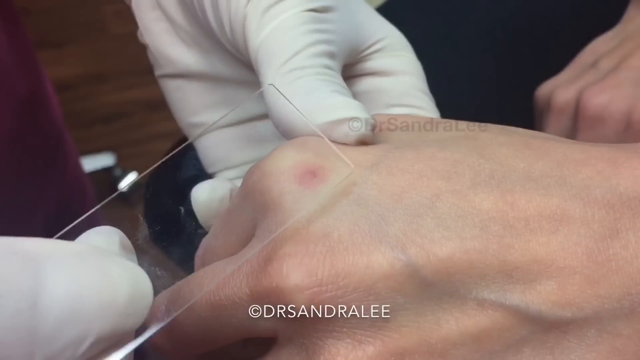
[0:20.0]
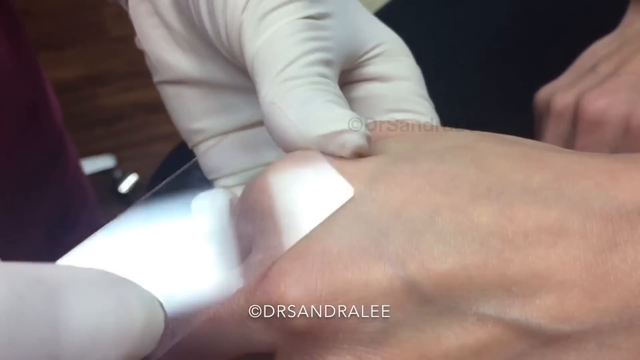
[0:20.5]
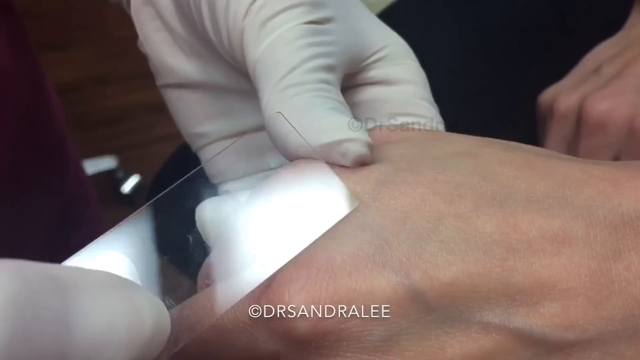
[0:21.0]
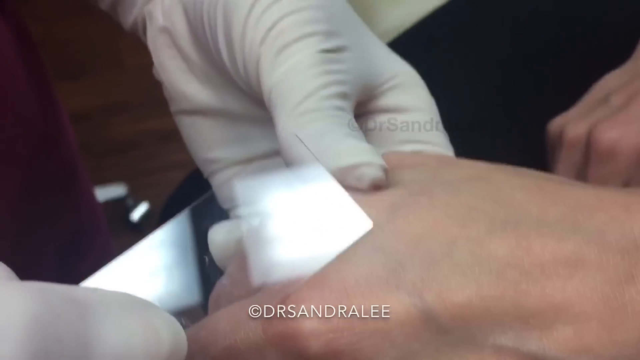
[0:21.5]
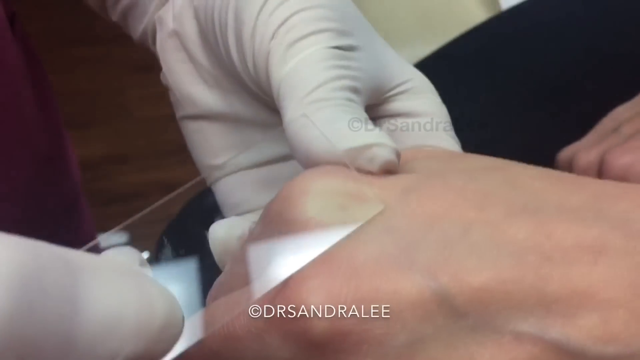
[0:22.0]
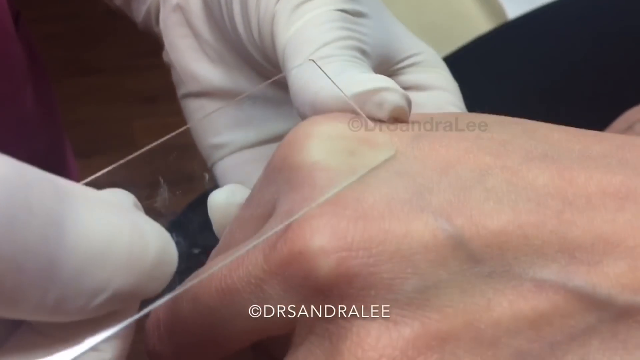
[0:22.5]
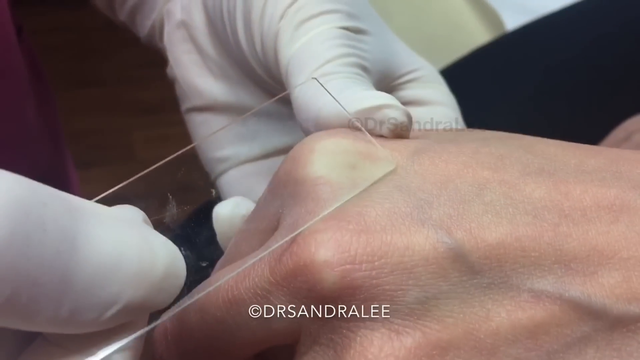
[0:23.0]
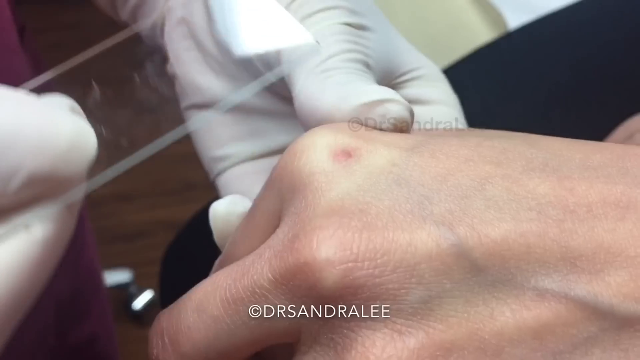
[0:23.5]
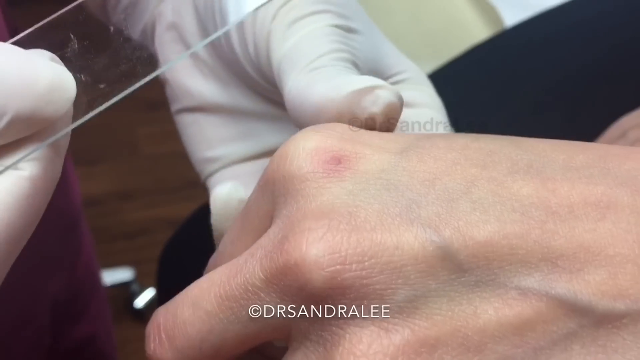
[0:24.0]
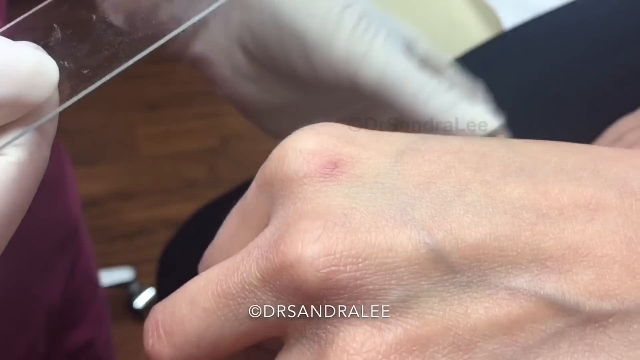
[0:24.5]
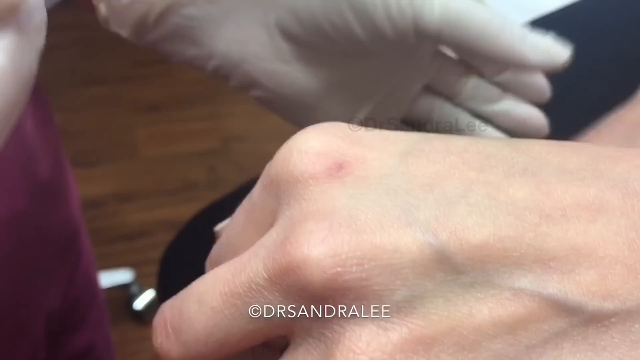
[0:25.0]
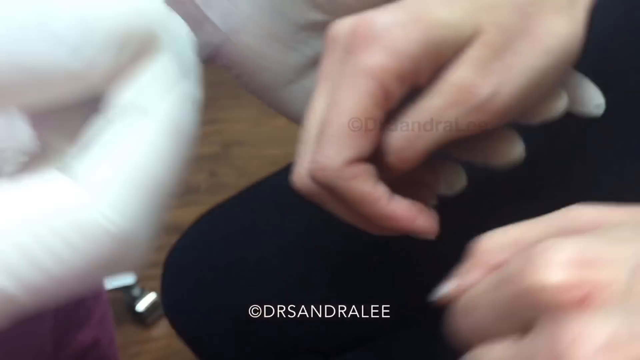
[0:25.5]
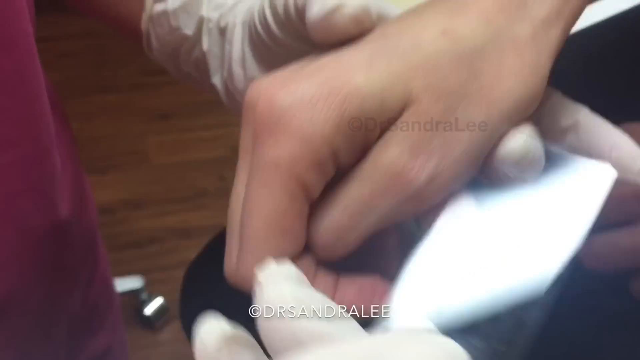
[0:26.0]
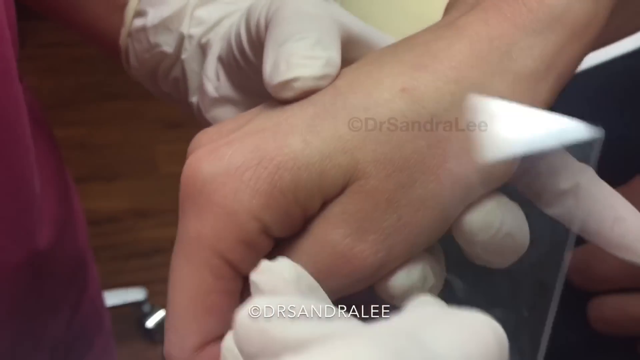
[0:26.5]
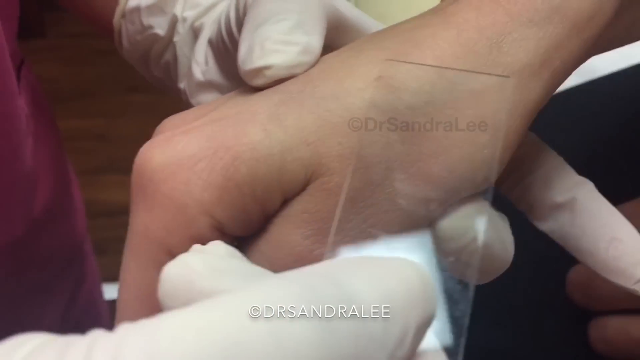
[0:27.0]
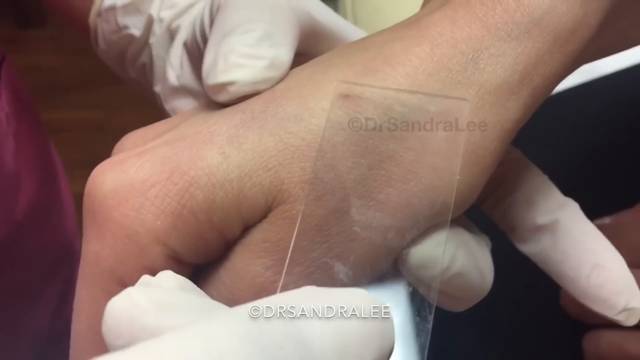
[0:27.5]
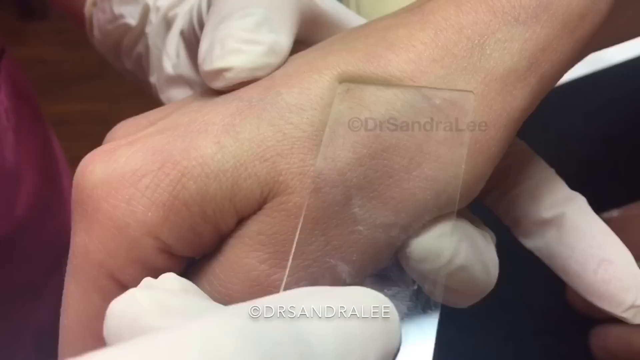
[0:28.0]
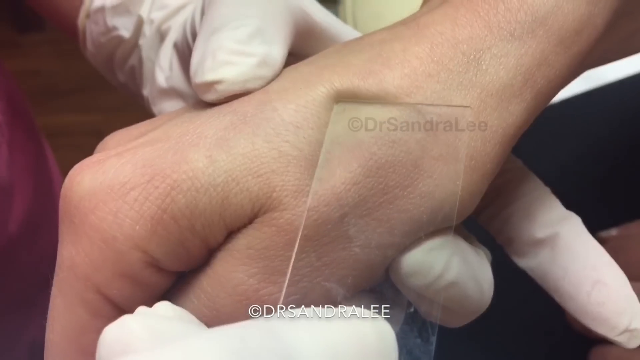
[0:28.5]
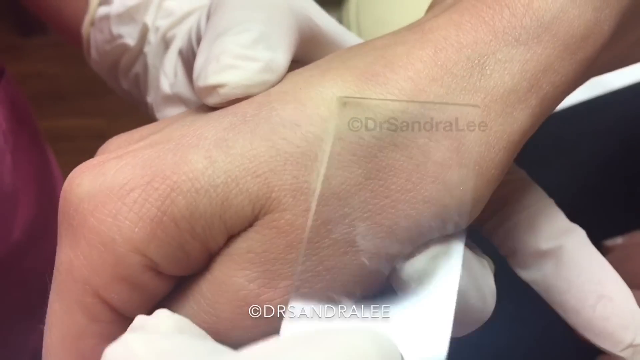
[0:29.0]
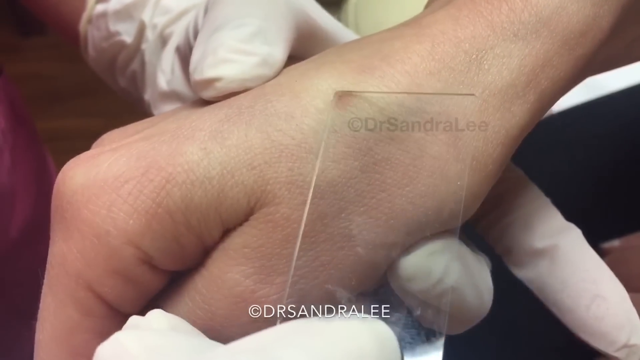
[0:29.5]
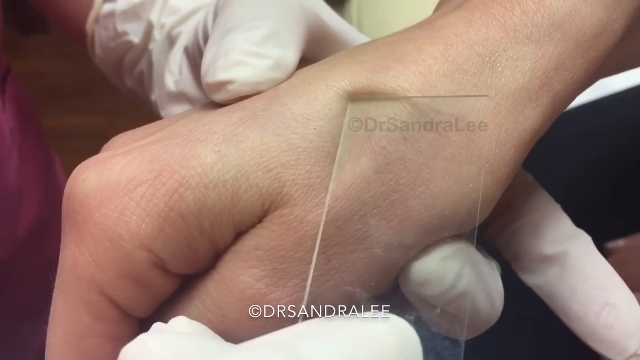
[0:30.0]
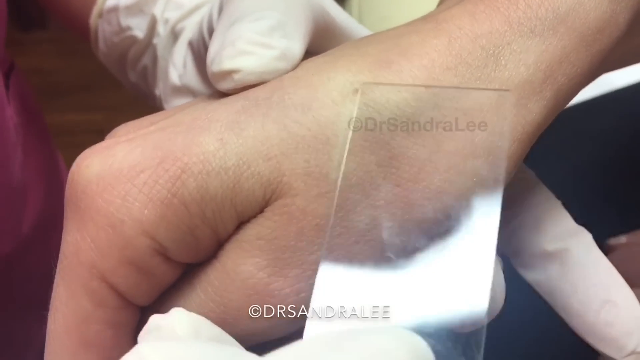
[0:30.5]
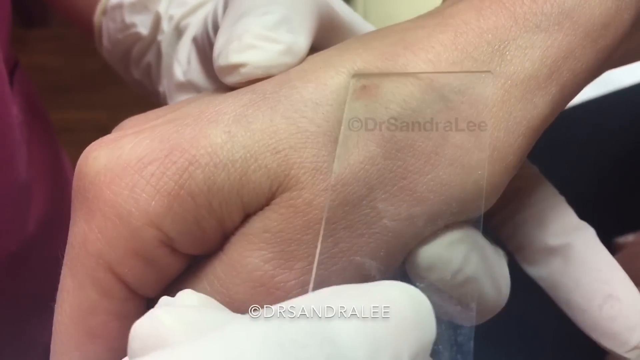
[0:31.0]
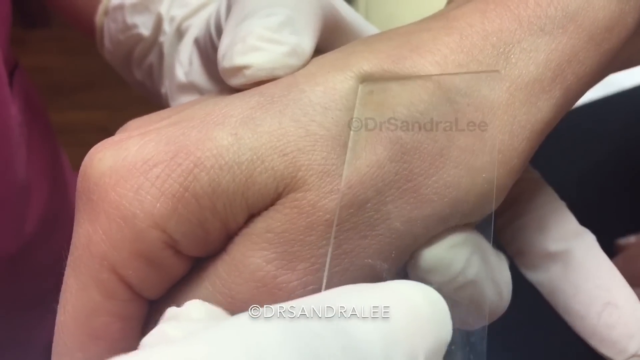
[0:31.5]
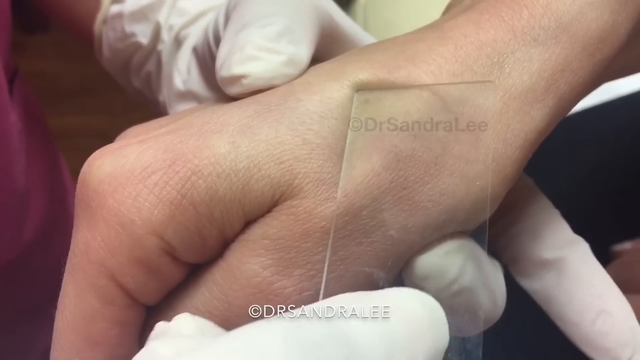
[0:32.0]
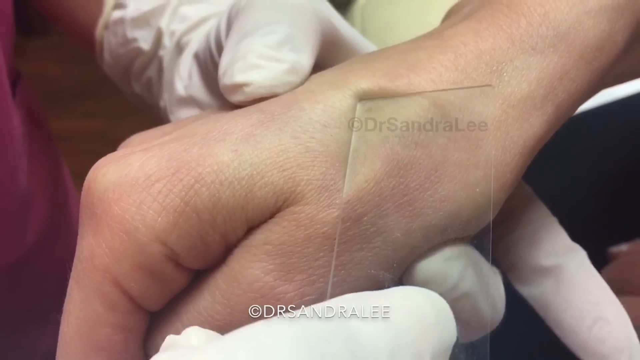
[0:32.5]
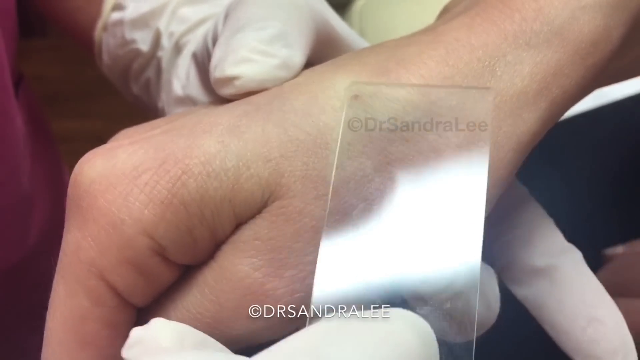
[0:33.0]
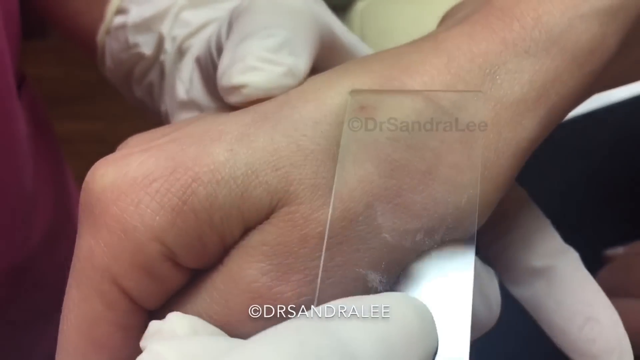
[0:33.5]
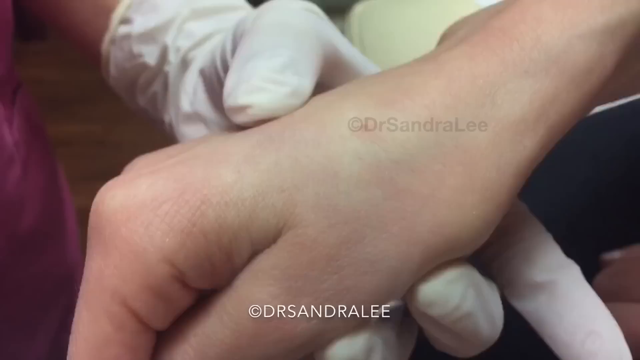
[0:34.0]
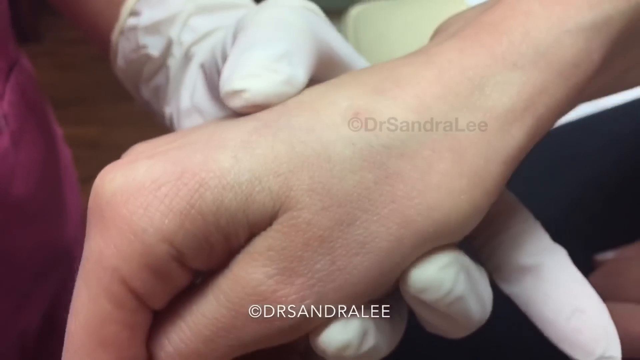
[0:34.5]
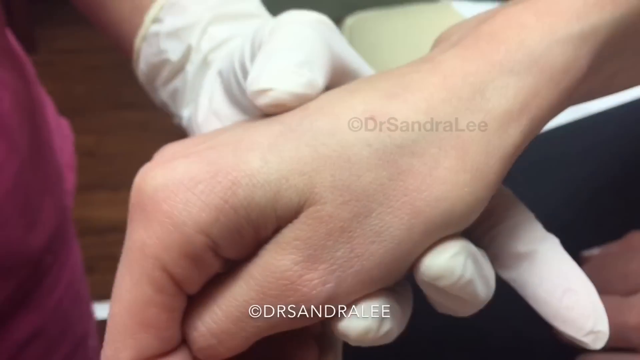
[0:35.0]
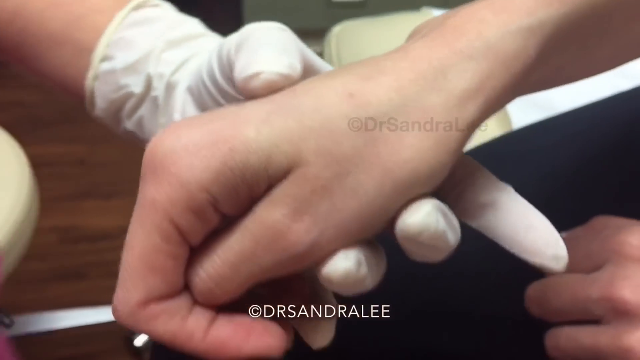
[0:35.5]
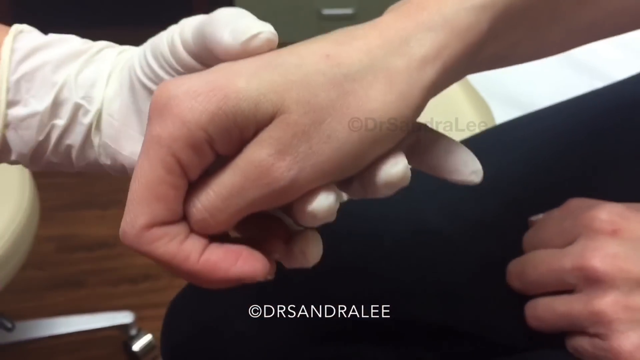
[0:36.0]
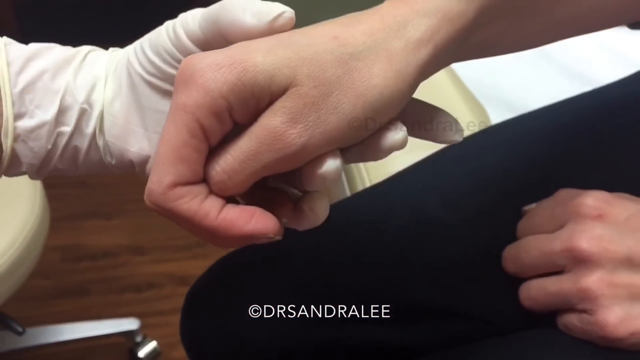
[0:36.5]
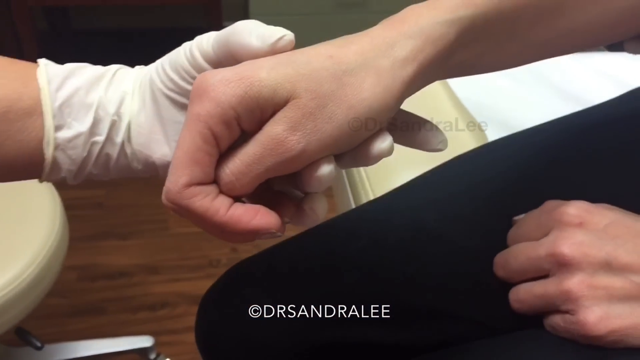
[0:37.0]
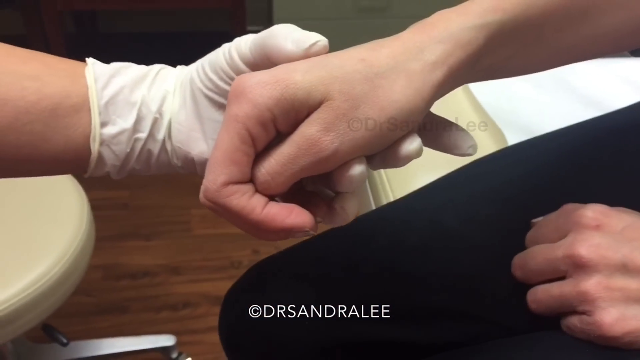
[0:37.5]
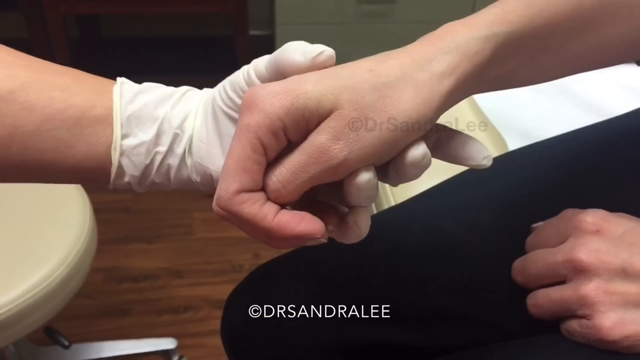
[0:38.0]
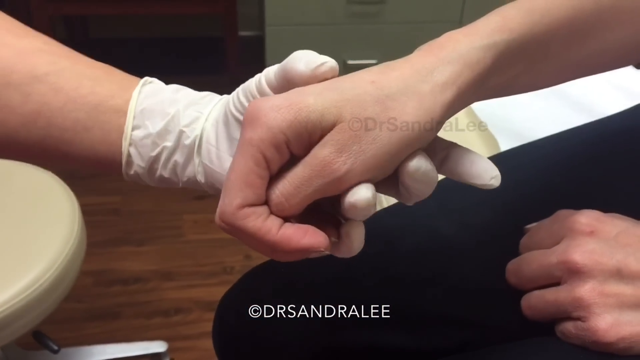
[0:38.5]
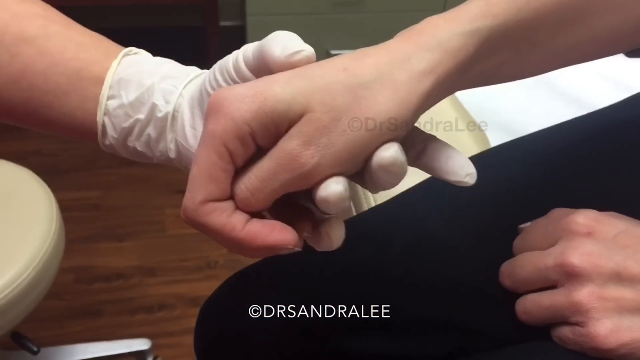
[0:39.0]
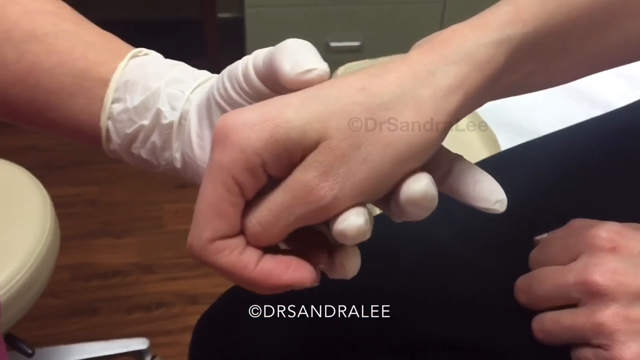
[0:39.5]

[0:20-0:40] The health care worker pushes the microscope slide onto the spot on his hand, and as she does, the spot turns from red to skin colored. She uses just the corner of the slide to kind of push it down, without poking into it. There are two spots, one on each of his hands; the one on the left hand is bigger. She keeps pushing the piece of glass onto the spots, and the color visibly changes.